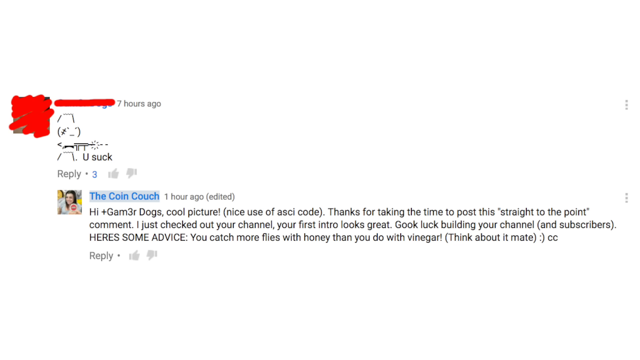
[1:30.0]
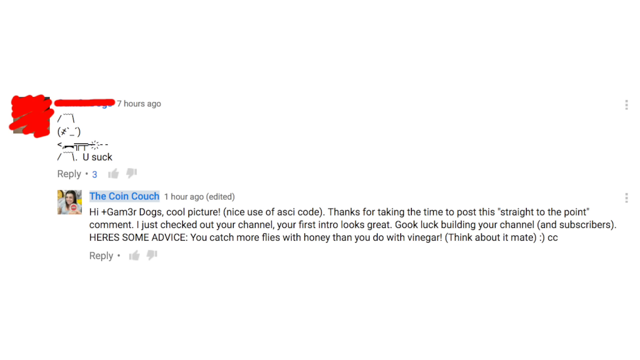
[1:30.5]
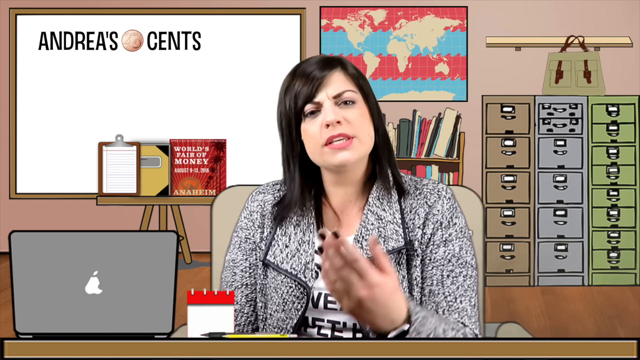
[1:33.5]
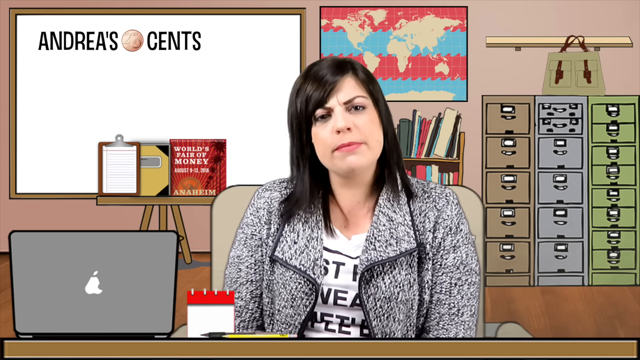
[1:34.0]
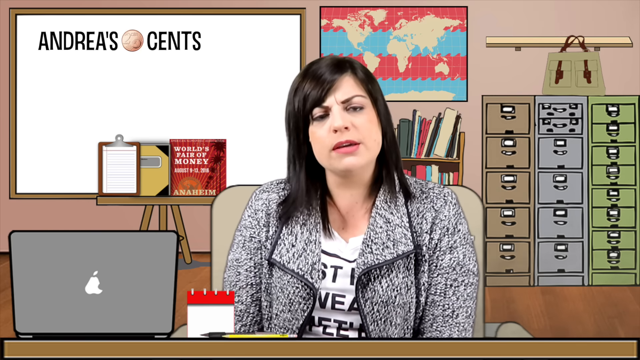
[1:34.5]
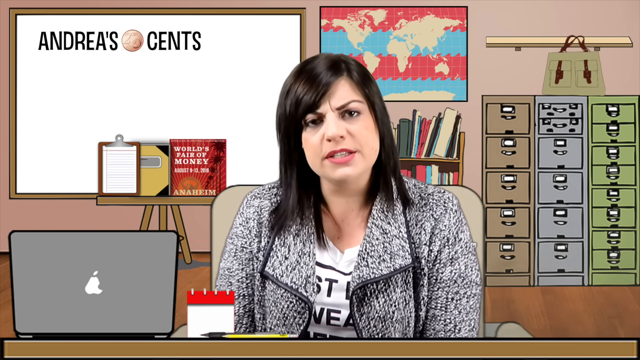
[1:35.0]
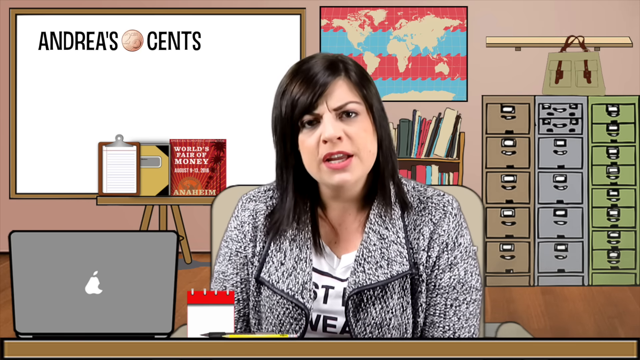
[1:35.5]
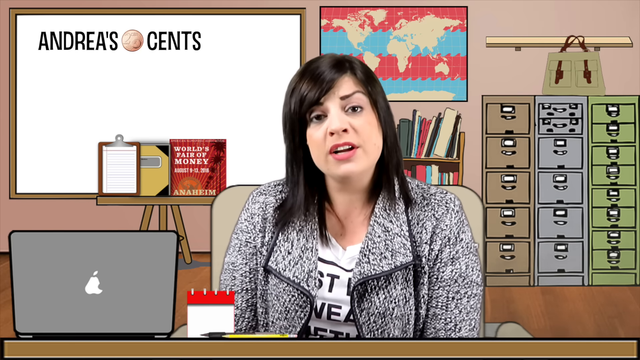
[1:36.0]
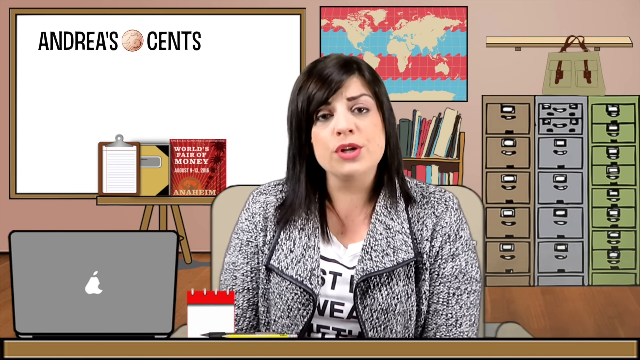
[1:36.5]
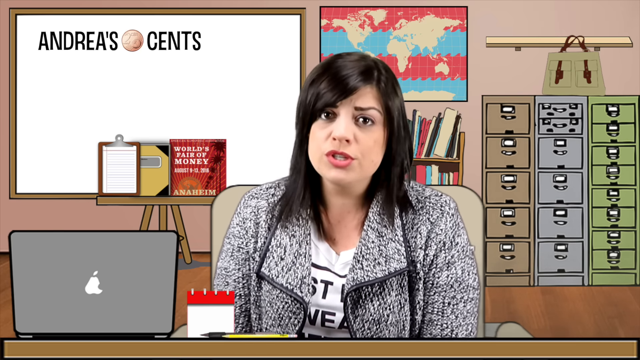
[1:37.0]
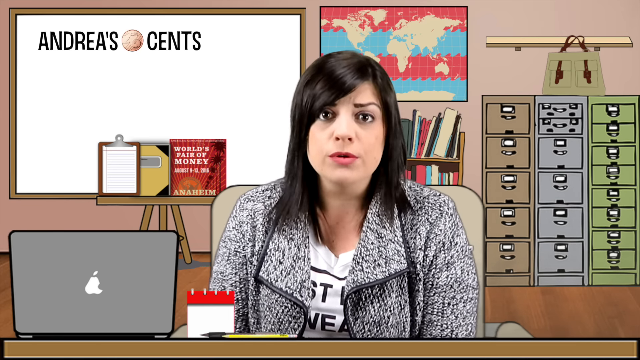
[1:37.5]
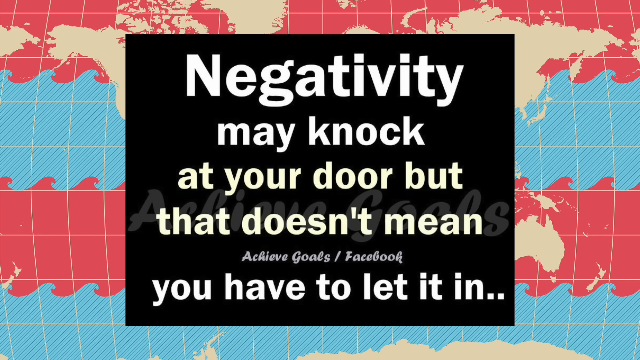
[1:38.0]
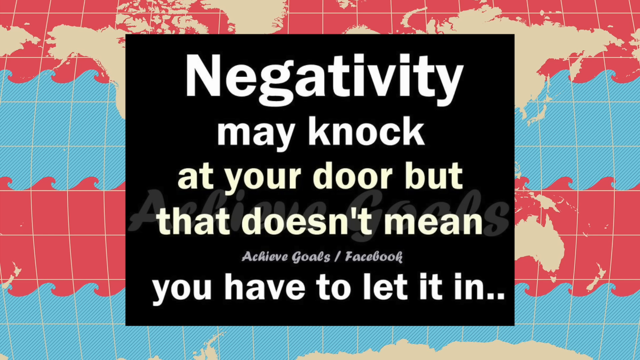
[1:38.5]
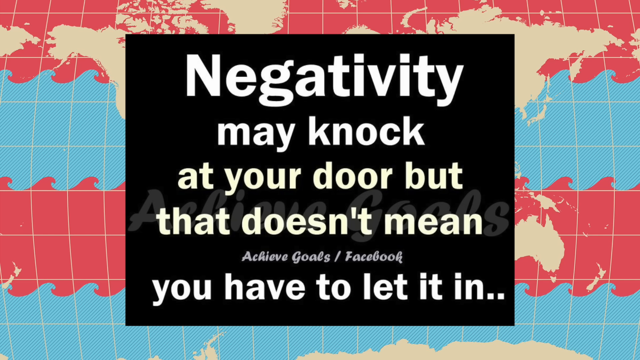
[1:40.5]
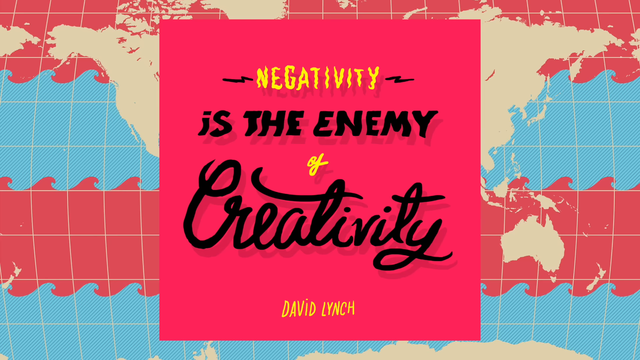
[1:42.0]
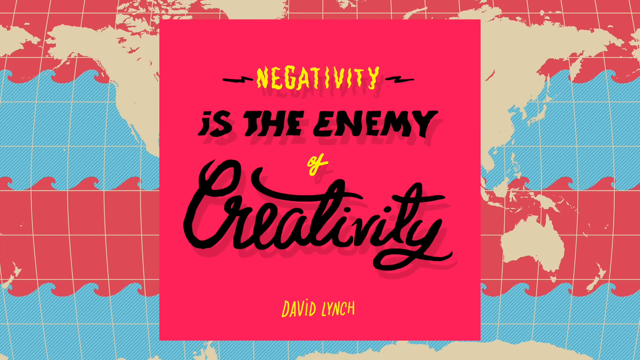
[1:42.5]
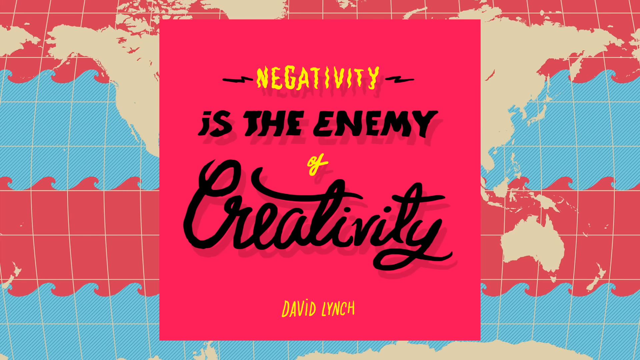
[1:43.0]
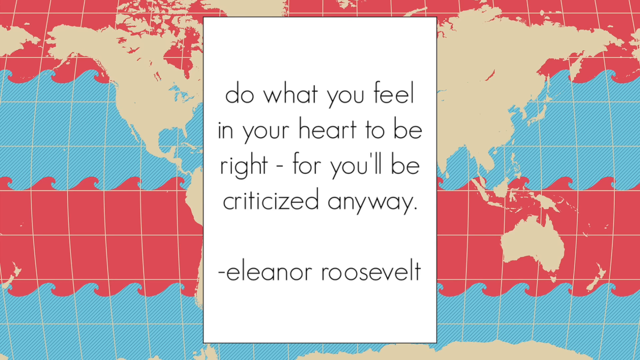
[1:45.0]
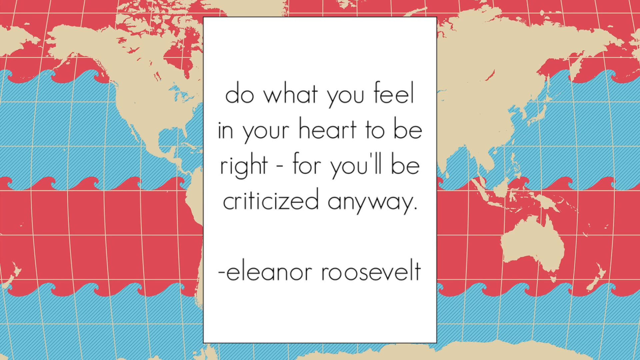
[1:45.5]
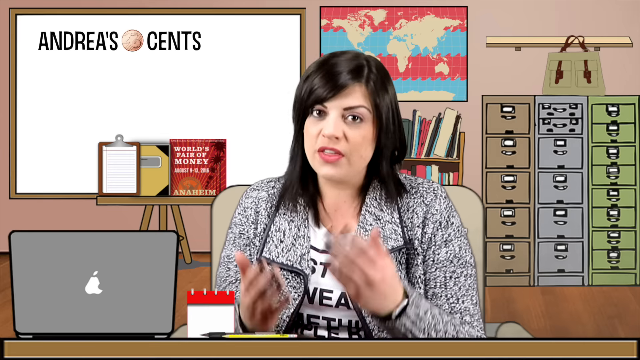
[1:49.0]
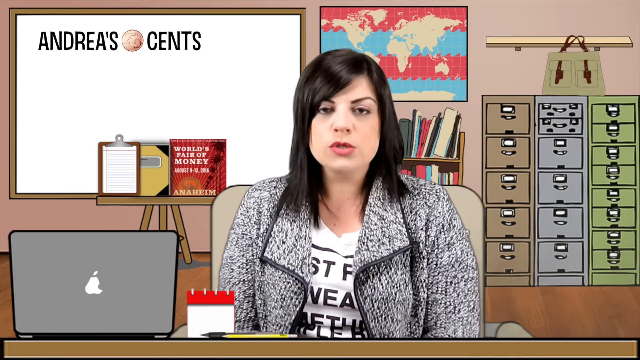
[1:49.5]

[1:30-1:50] Andrea talks to the viewer. Text on a black background says "negativity may knock at your door, but that doesn't mean you have to let it in," with an outline that says "achieve goals for Facebook." Behind that black picture is the world map from Andrea's background. Another picture says "negativity is the enemy of creativity, David Lynch," on a reddish background, written in black and yellow. Another, on a white background, reads "do what you feel in your heart to be right for you will be criticized anyway Eleanor Roosevelt." Andrea is then seen talking to the viewer, still gesturing with her hand.